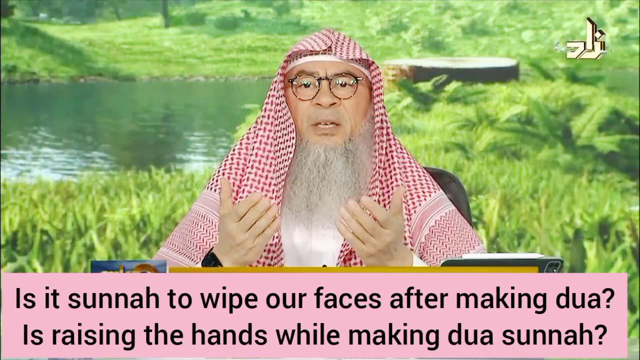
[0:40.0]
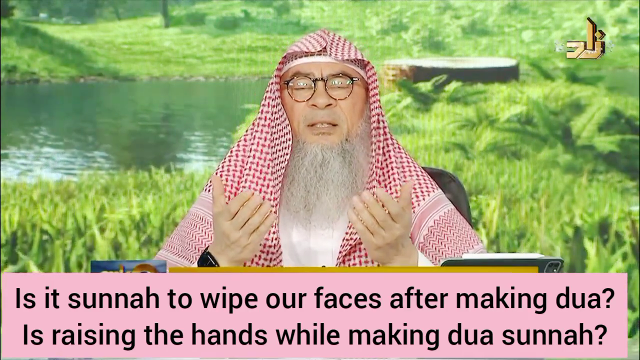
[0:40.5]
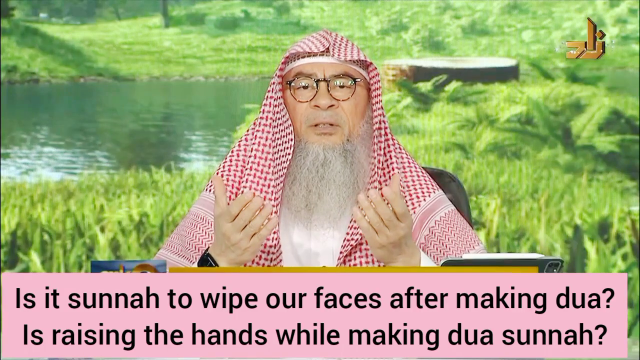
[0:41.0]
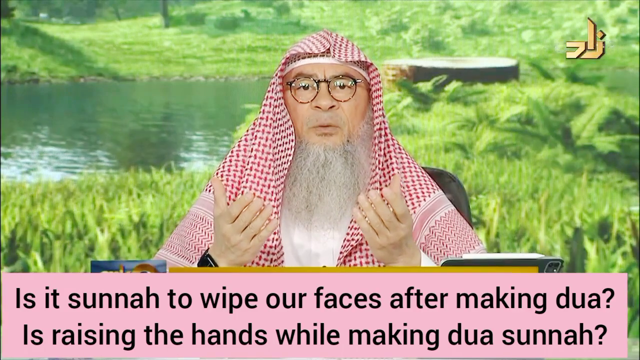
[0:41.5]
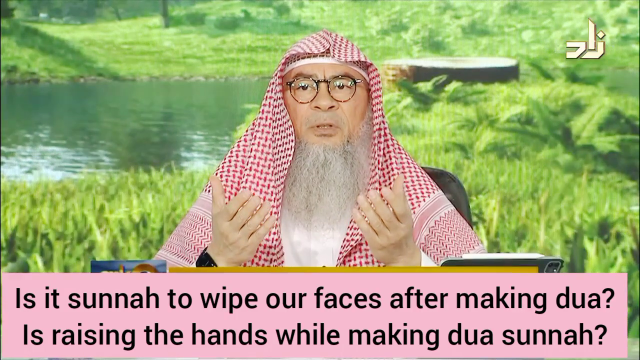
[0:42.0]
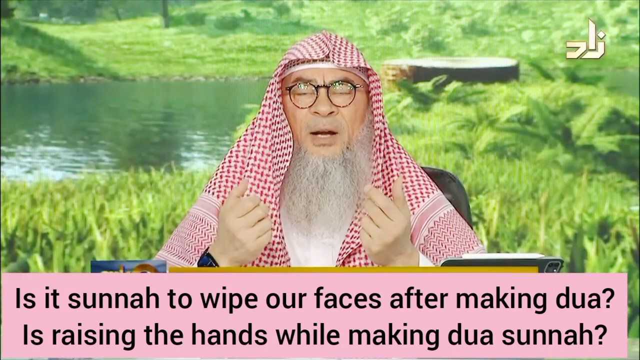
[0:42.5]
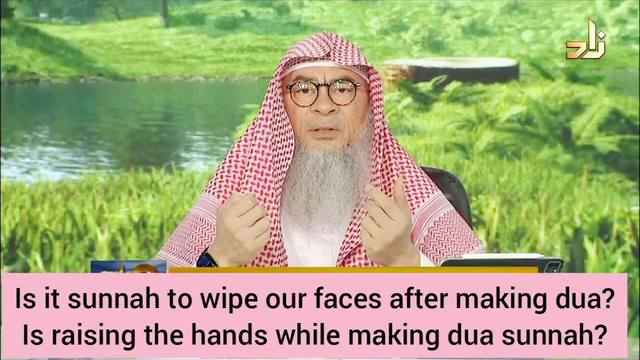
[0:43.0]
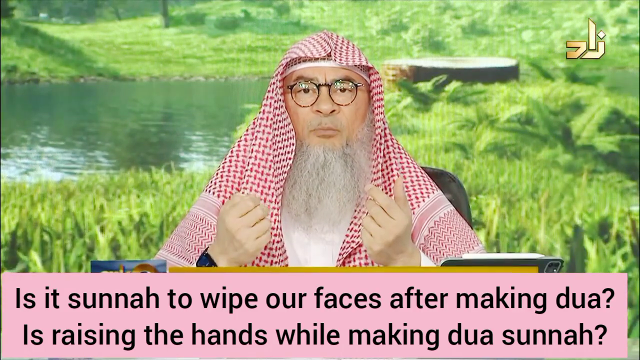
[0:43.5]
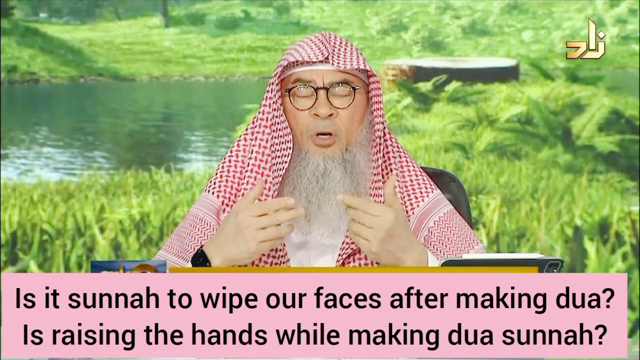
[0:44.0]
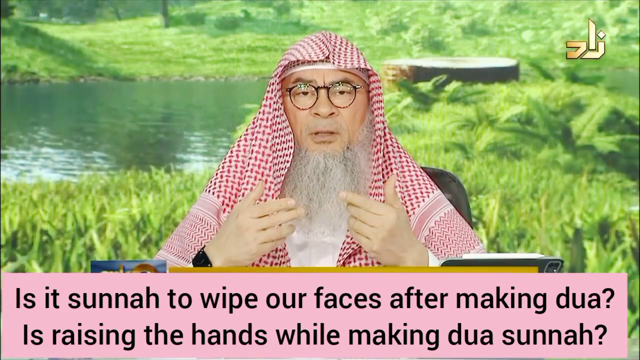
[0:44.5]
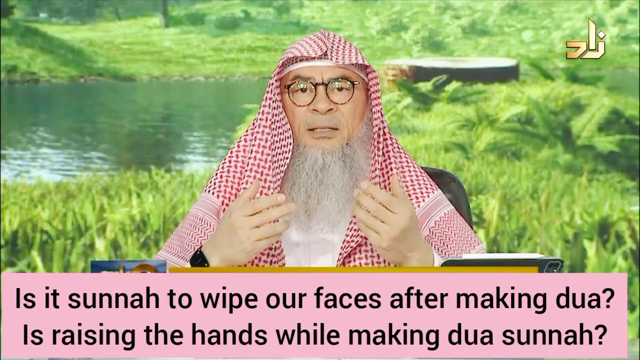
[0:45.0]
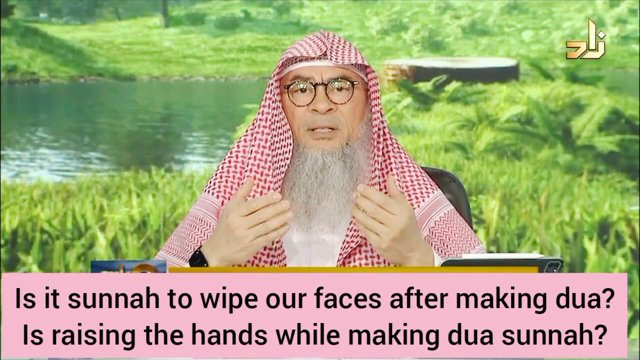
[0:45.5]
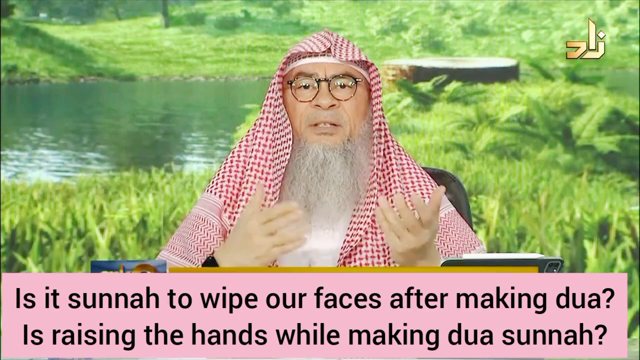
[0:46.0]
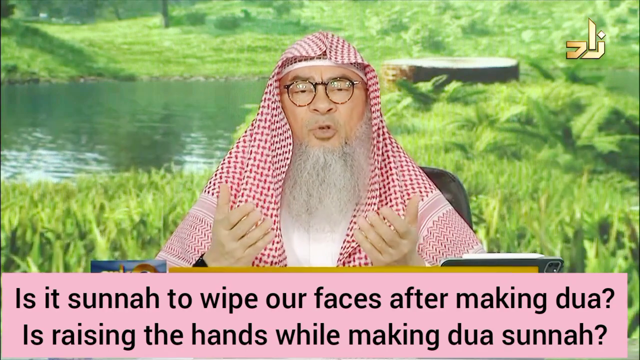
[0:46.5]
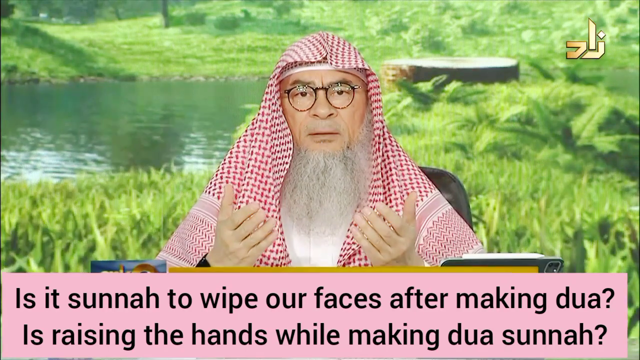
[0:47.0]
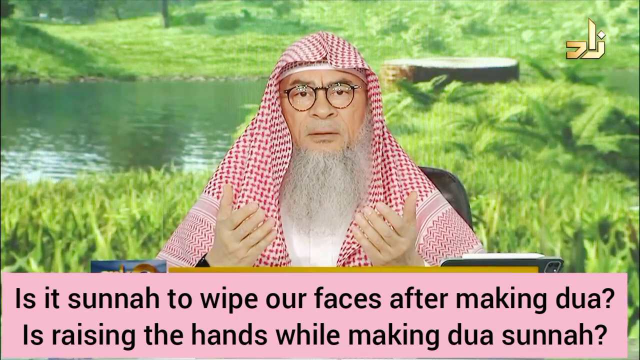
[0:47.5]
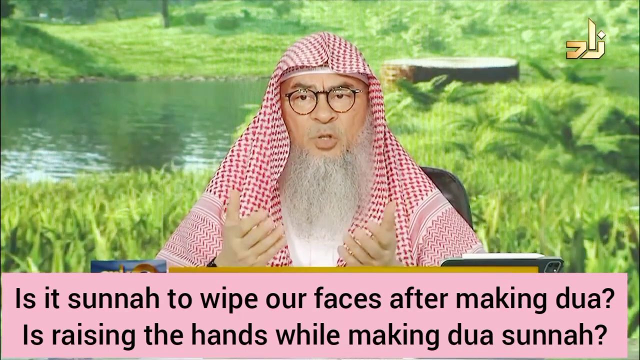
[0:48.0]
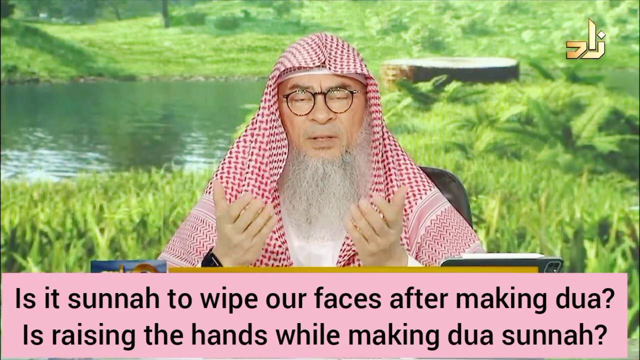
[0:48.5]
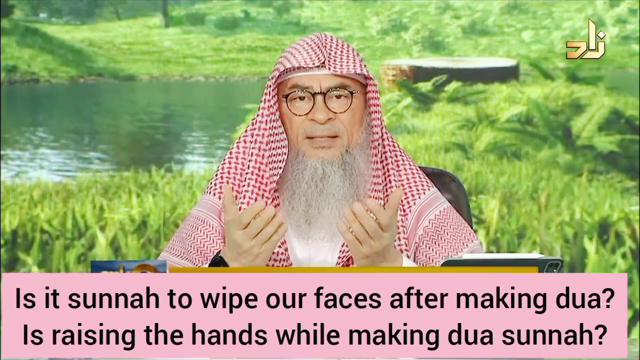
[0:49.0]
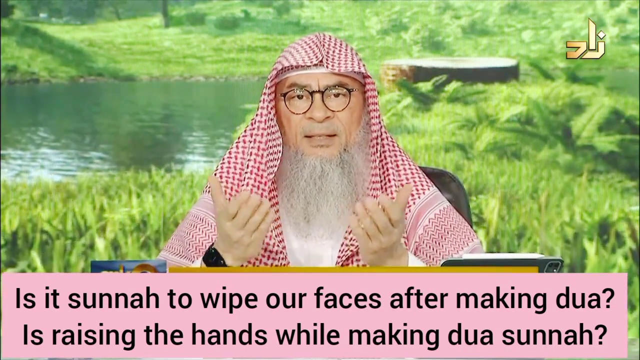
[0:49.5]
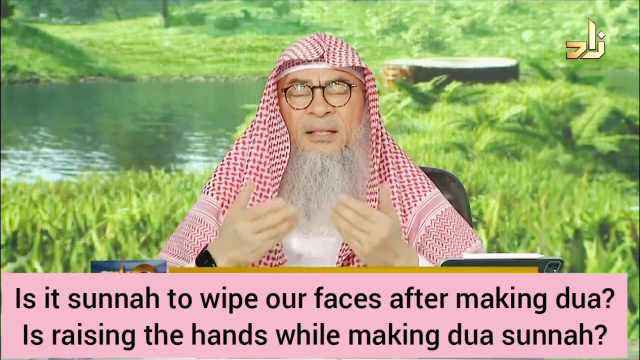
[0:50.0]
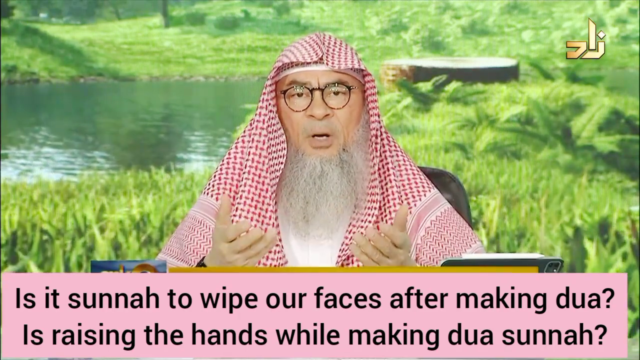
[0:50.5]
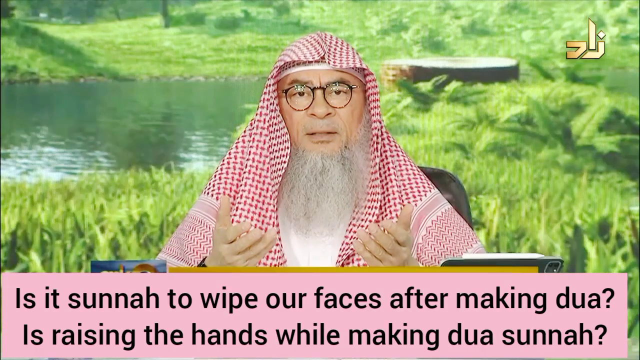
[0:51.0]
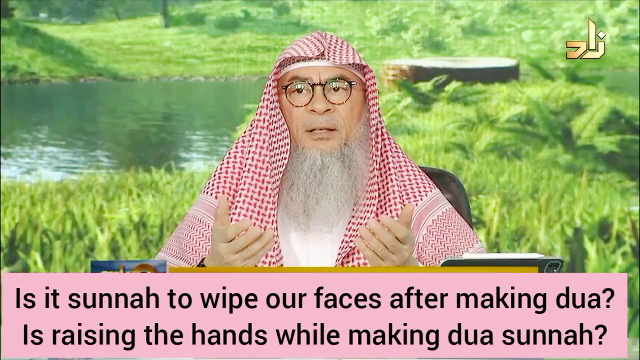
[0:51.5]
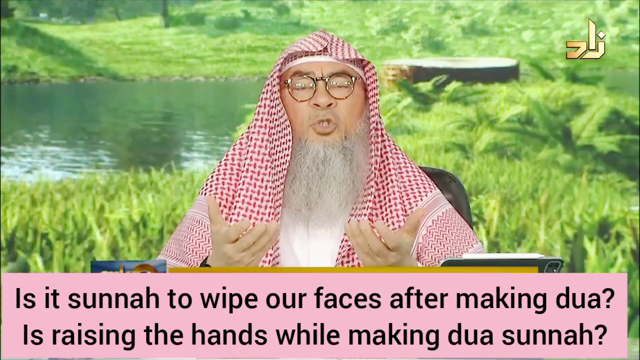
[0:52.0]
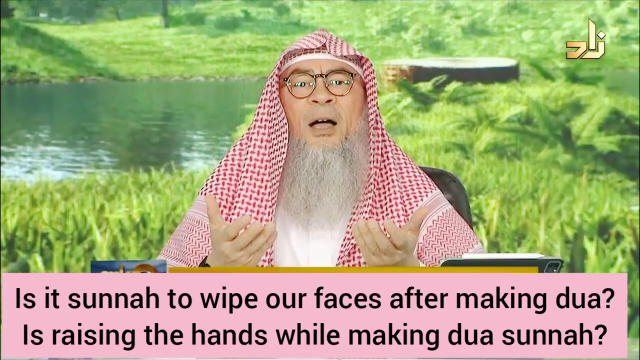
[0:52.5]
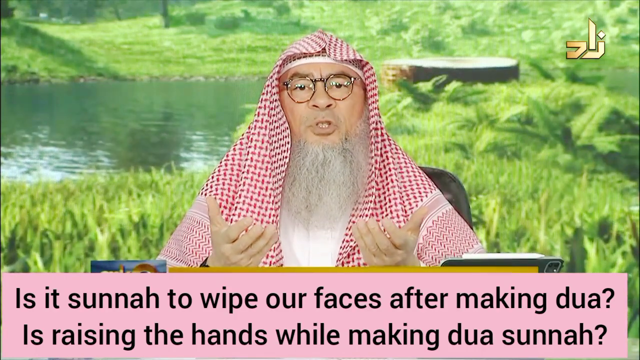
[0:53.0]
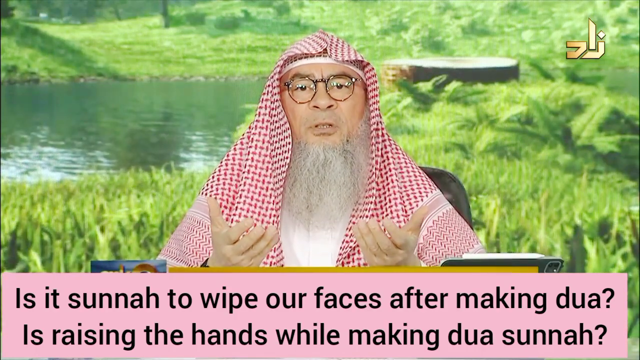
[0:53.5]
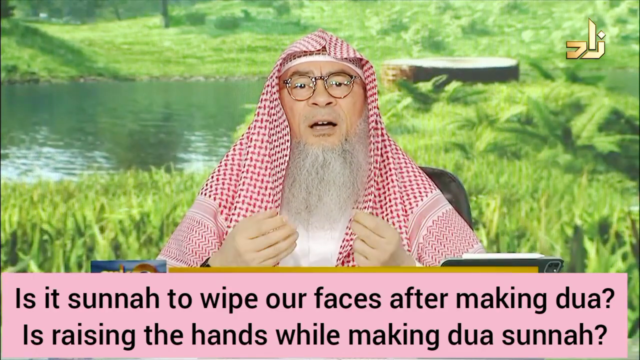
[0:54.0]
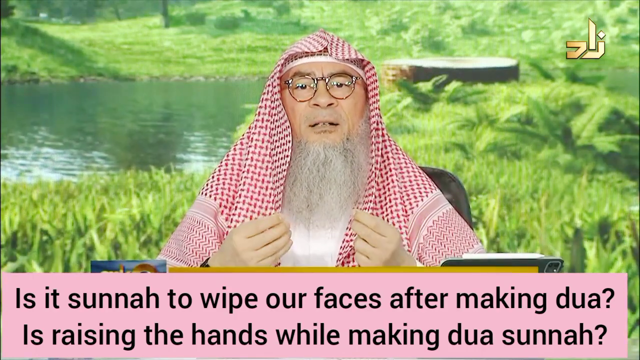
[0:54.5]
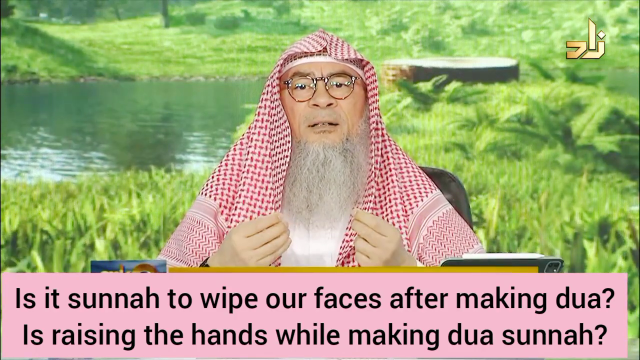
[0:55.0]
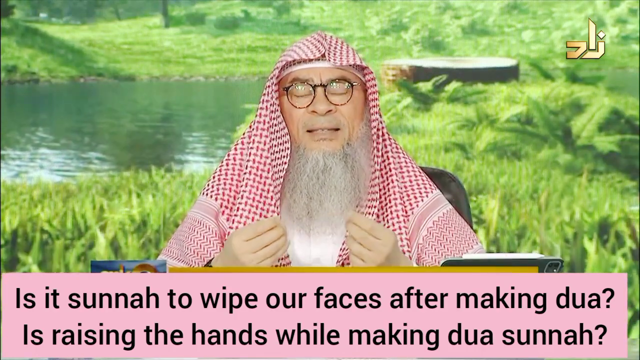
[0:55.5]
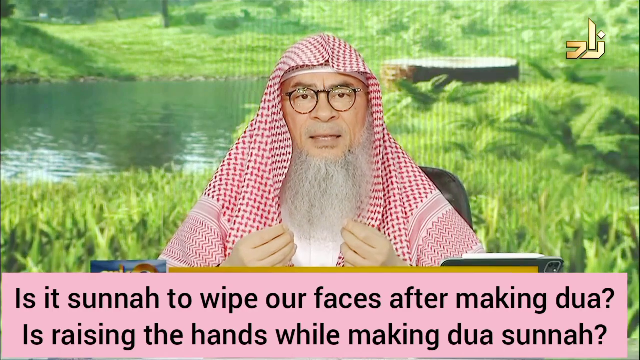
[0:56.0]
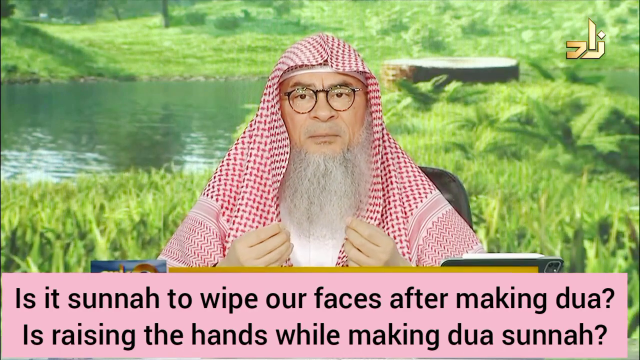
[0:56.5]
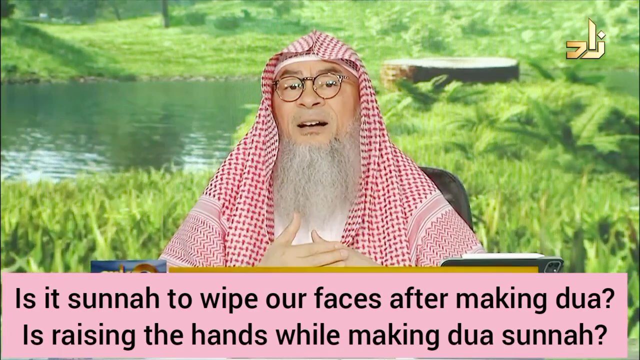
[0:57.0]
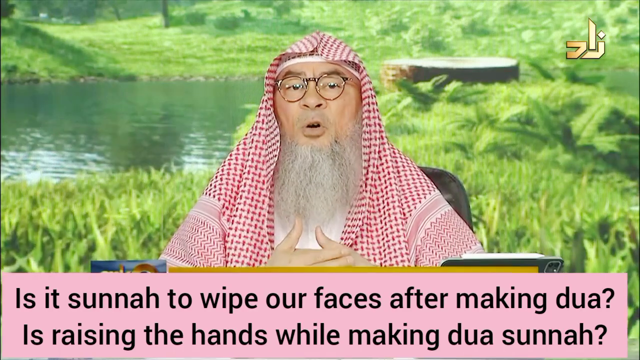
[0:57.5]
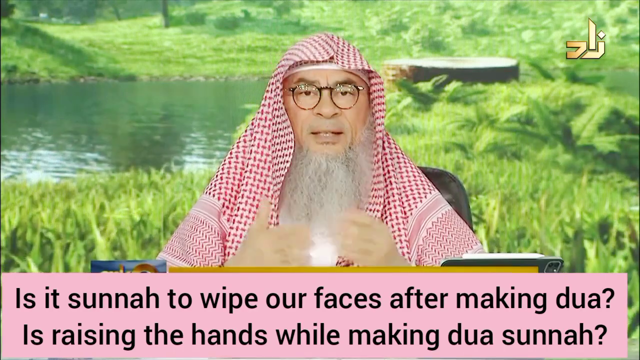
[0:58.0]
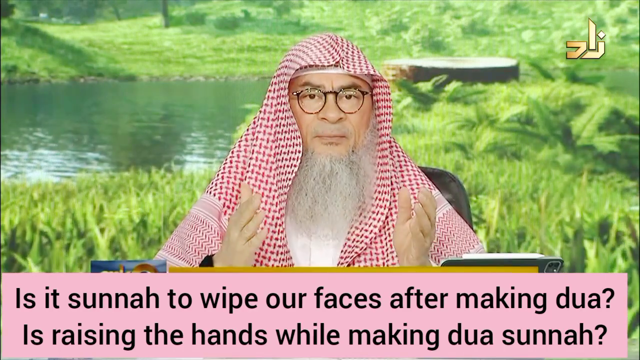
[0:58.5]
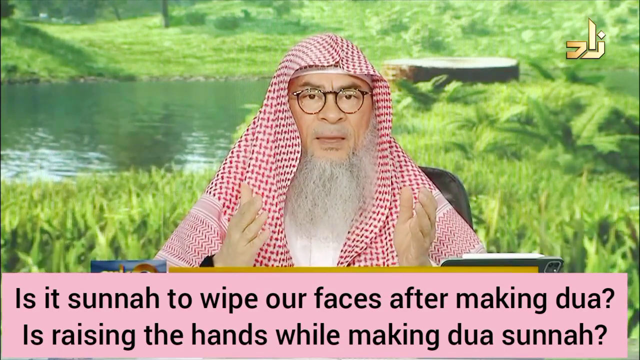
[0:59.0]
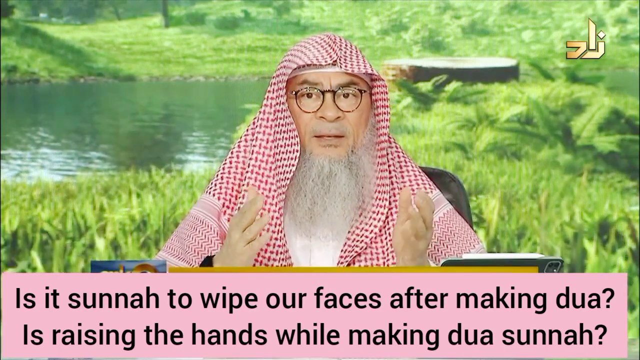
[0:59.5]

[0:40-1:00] The same gentleman is shown in close-up in front of the green screen background with green shrubbery and a little pond. At the bottom of the screen is a pink text box with black text showing the two questions. He appears to be talking and uses his hands a lot as he speaks. In the top right corner there is a logo that looks like writing in a different alphabet.